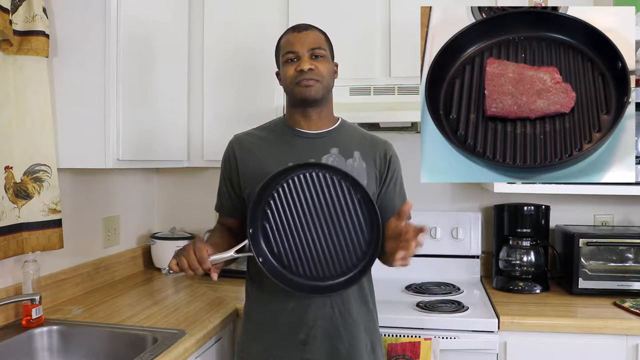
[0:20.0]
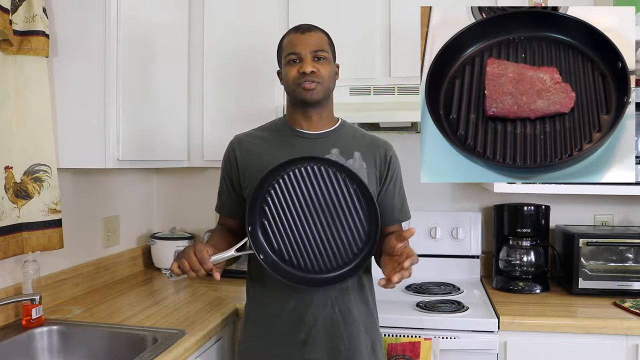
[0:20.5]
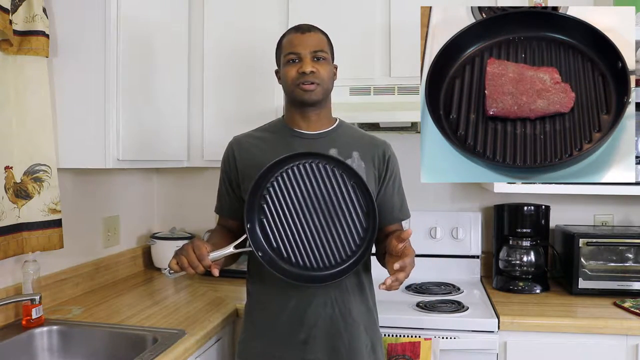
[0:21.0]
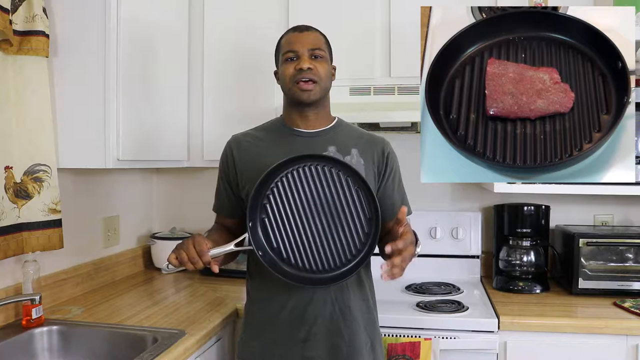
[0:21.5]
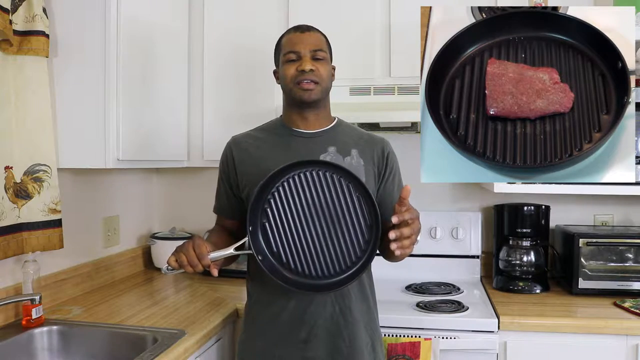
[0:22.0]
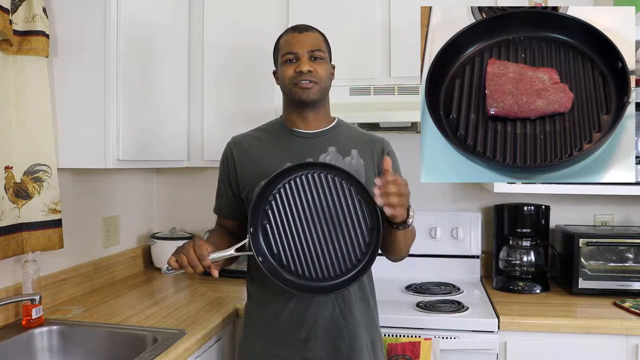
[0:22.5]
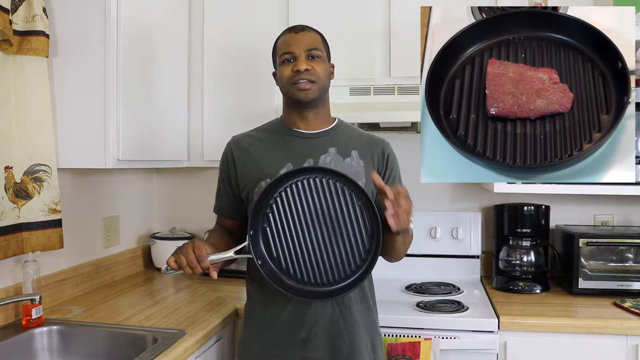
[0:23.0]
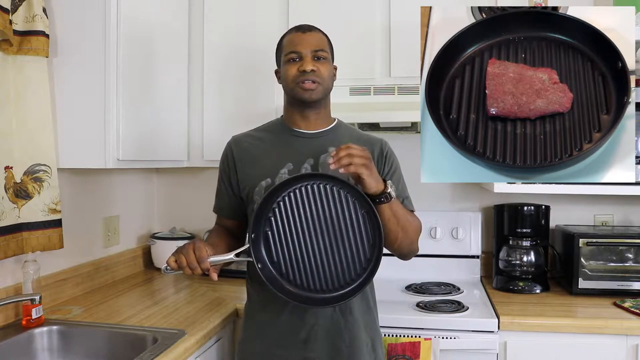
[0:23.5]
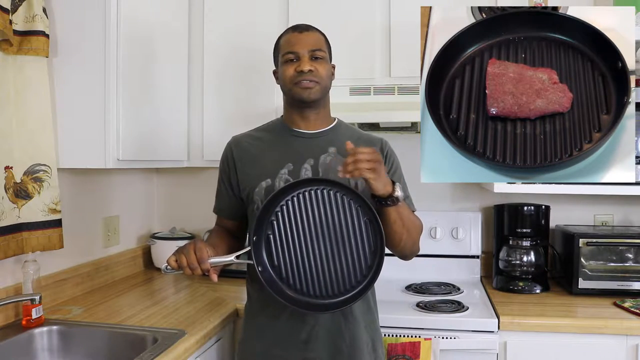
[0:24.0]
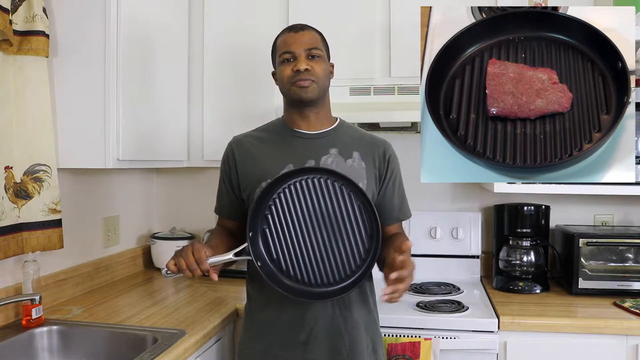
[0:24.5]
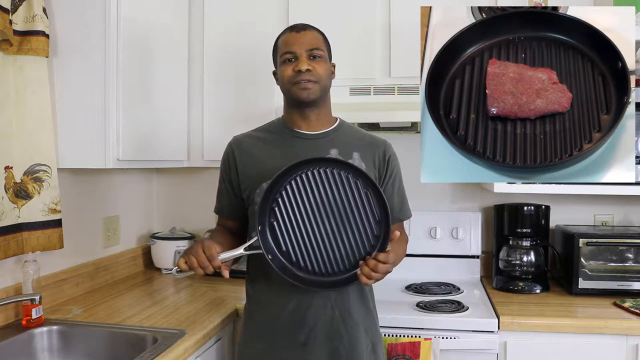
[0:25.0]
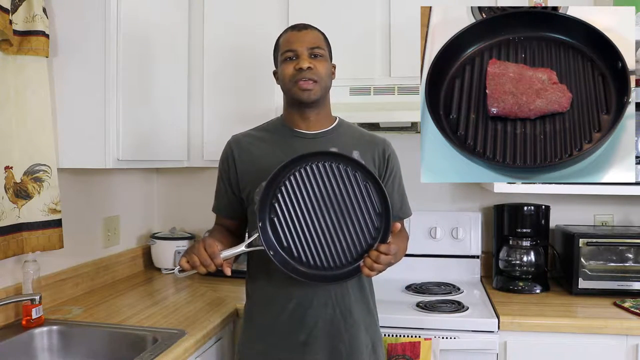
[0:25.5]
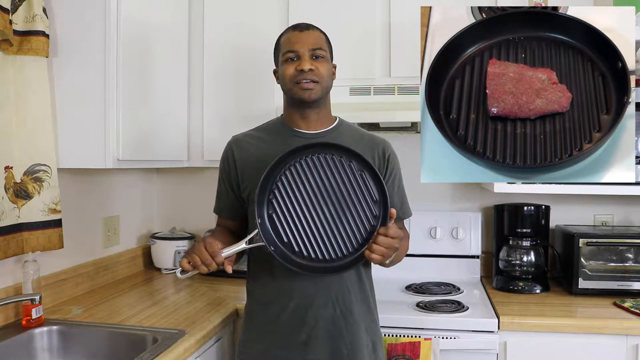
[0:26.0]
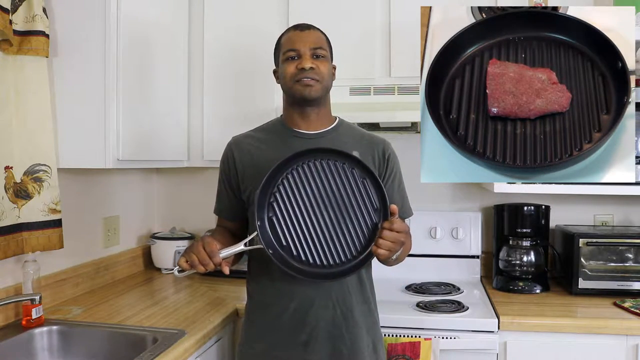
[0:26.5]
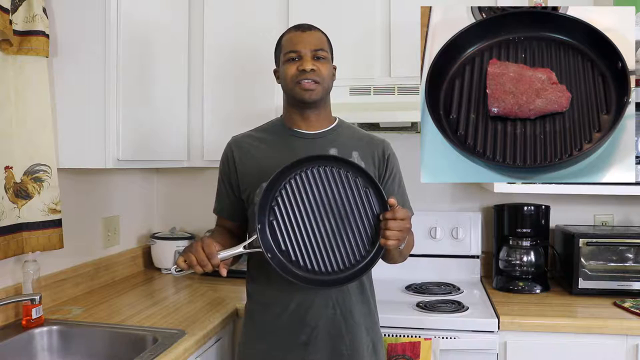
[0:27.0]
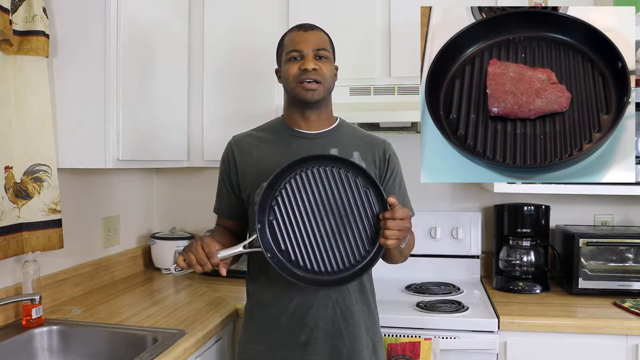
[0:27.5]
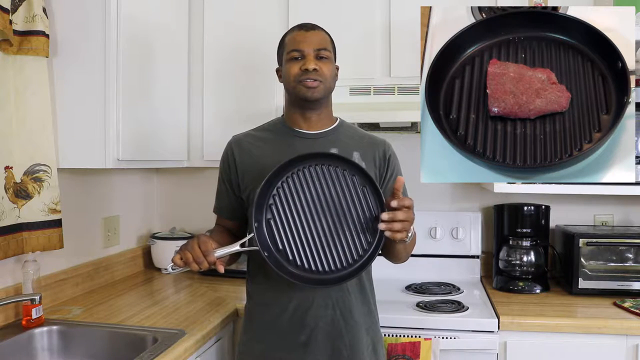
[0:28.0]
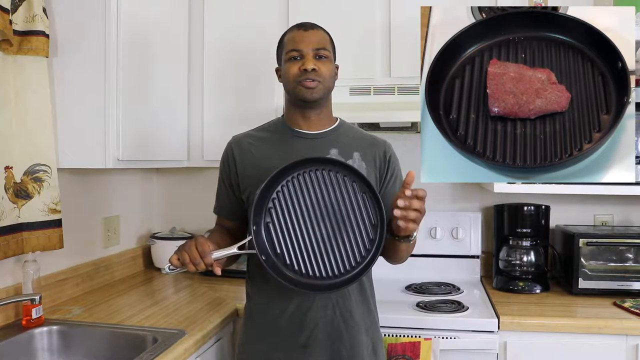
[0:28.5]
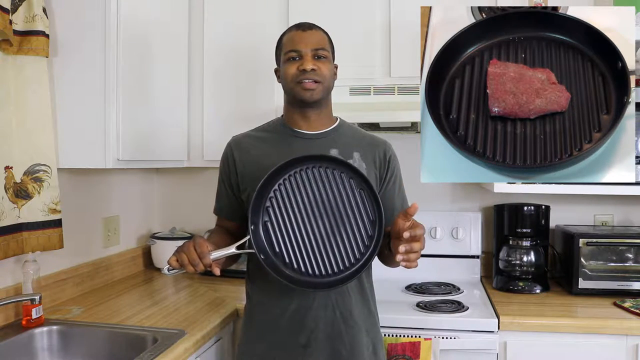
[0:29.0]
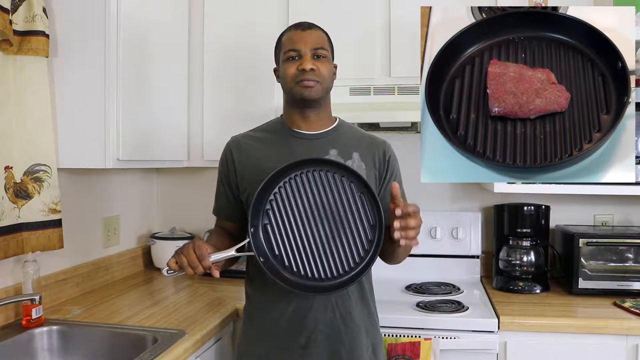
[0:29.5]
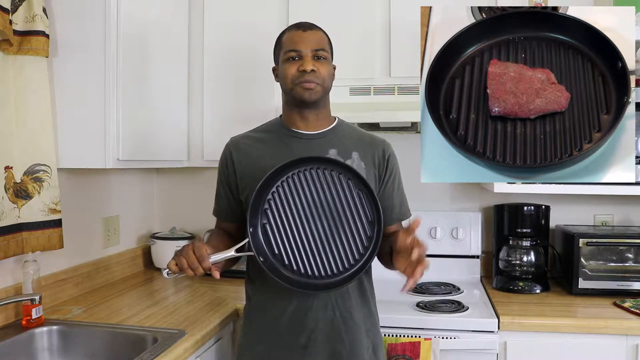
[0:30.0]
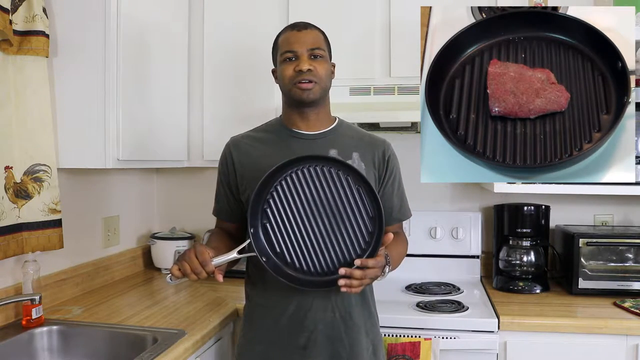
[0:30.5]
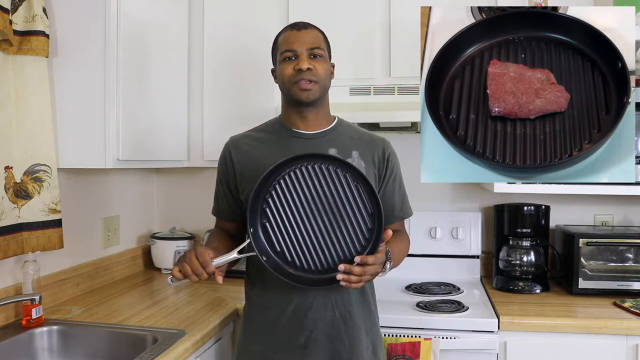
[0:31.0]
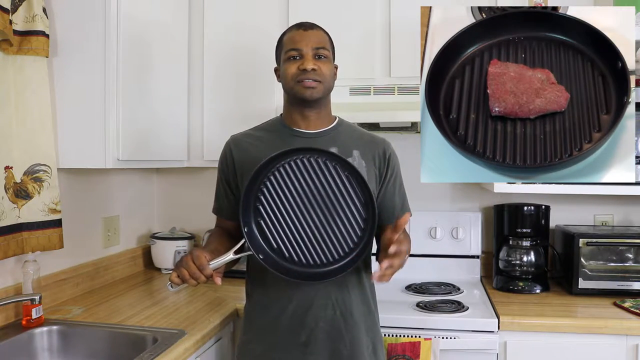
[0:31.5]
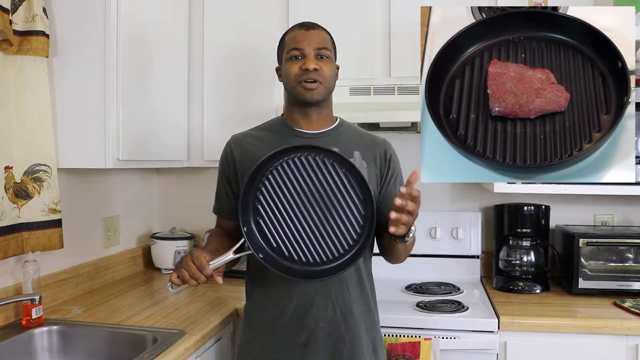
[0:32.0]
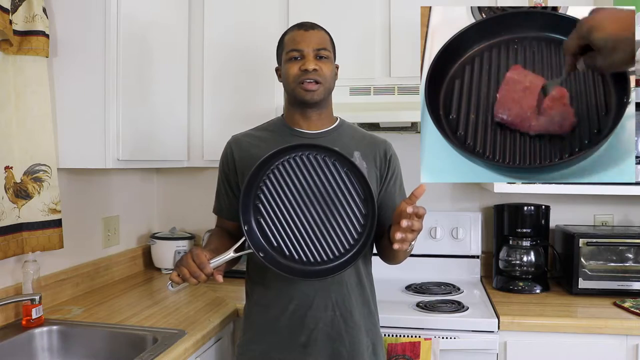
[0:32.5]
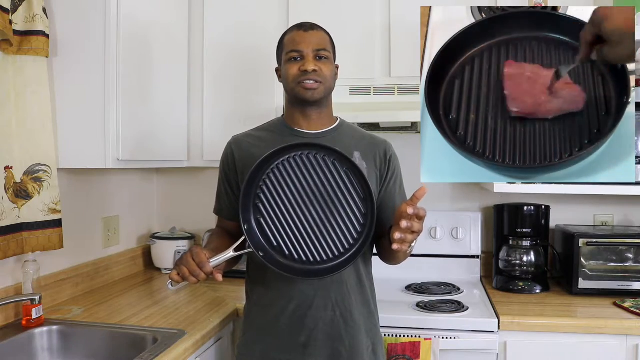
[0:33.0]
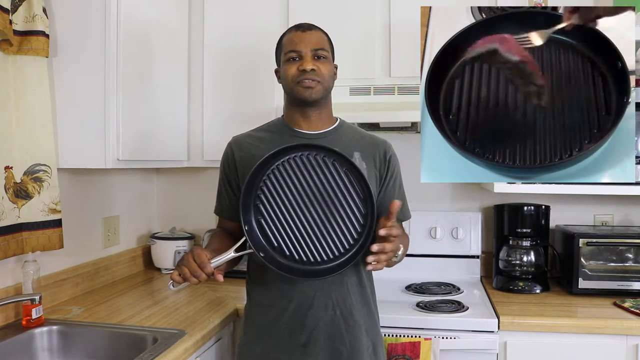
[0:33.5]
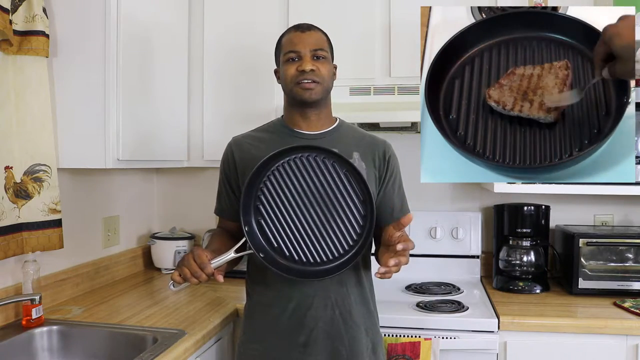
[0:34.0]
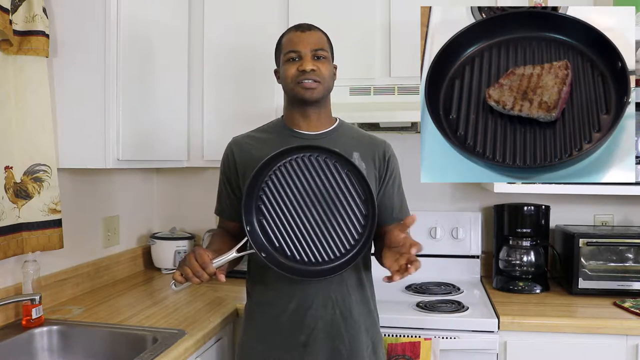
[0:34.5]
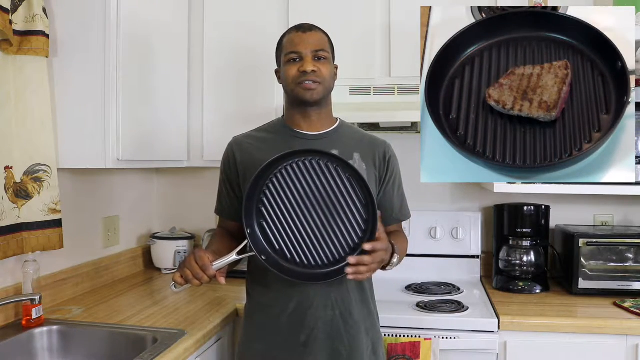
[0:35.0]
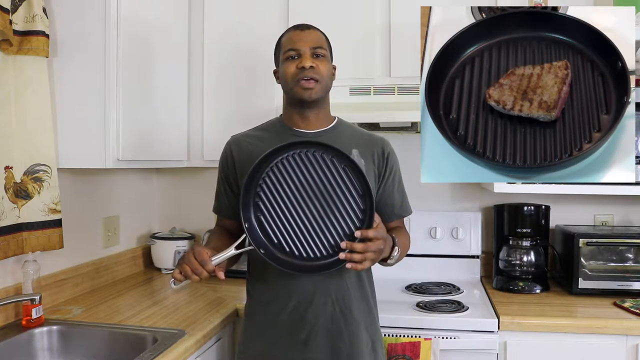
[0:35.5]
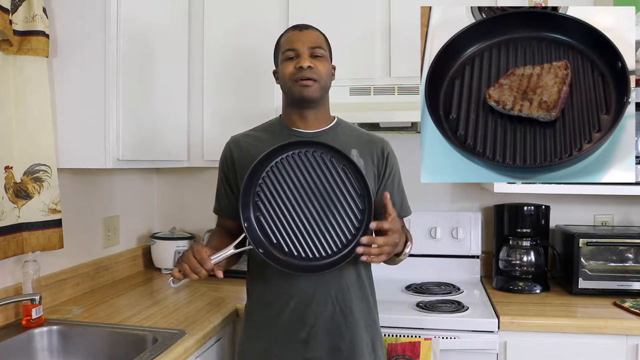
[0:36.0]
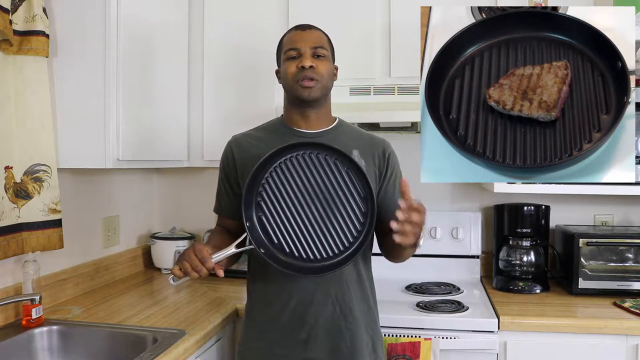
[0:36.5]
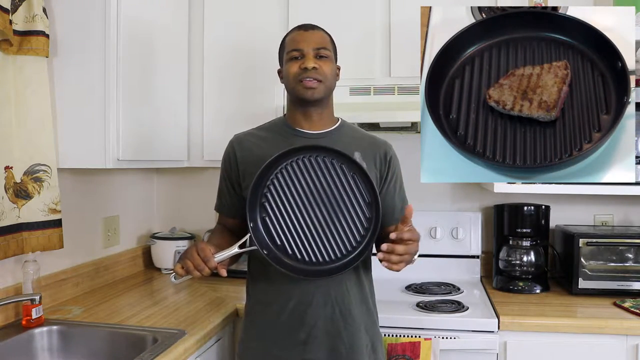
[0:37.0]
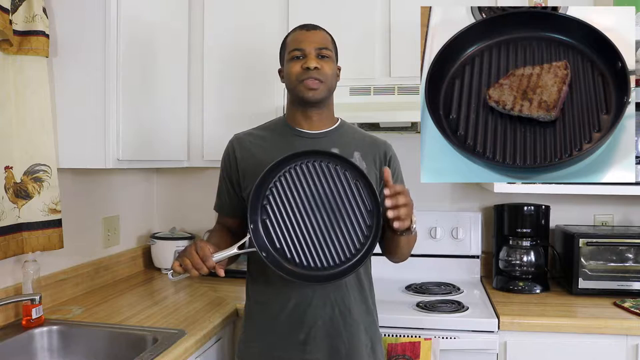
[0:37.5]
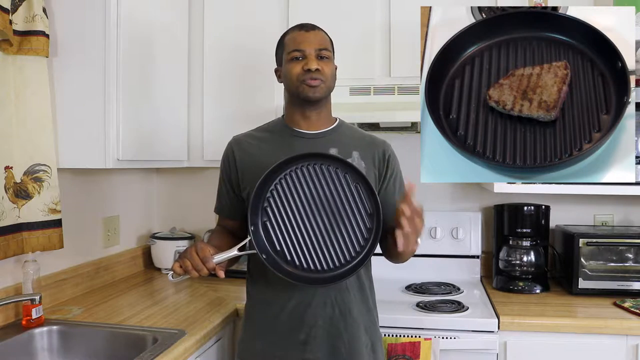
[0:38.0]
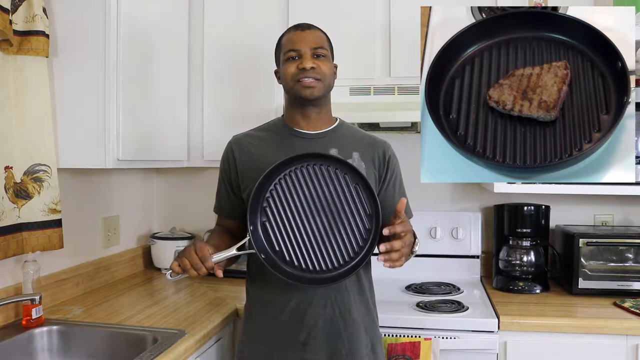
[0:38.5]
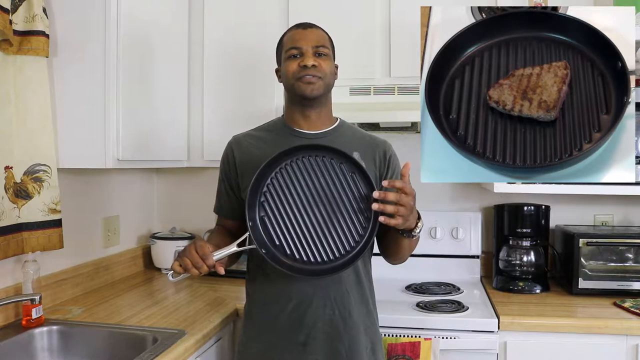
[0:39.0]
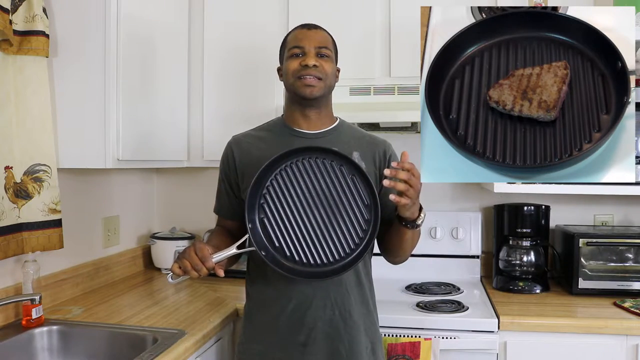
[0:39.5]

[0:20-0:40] A man stands in front of a stove and some counters, apparently inside his kitchen, talking directly to the camera. He holds a pan by the handle with his right hand and motions with his left hand. An overlay in the top right of the video shows the pan with a piece of meat inside it, the pan on top of a cutting board; this overlay is a time-lapse video of a man cooking a steak. Various electronic appliances are on the counter: a coffee maker on the right side, an electrical oven to the right of the coffee maker, and a stove to the left of it.